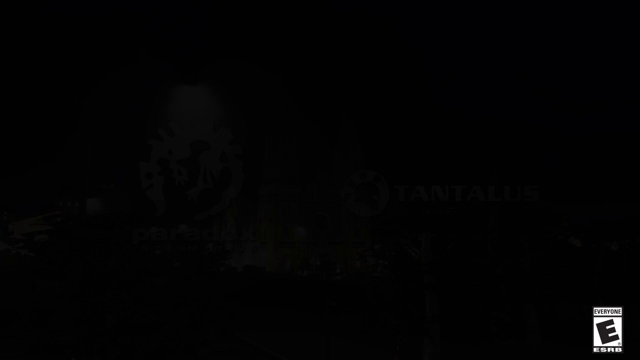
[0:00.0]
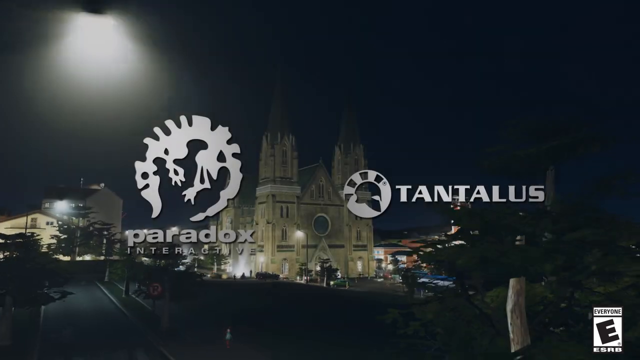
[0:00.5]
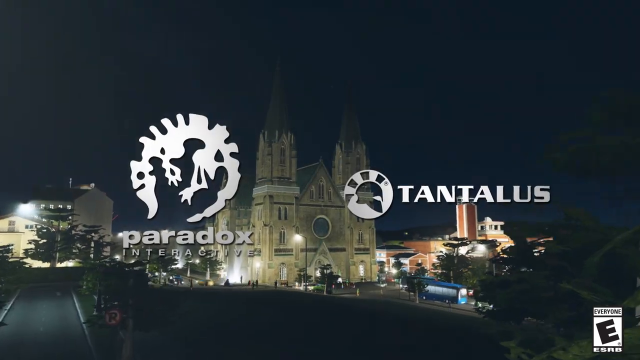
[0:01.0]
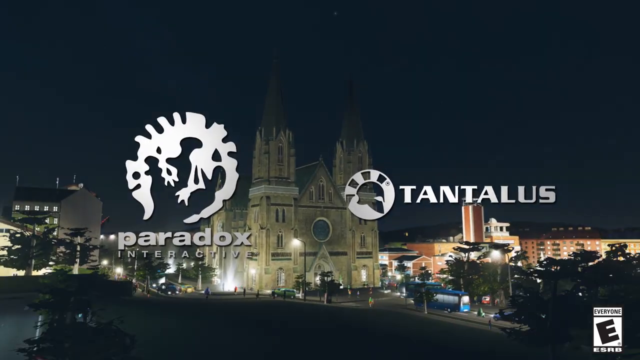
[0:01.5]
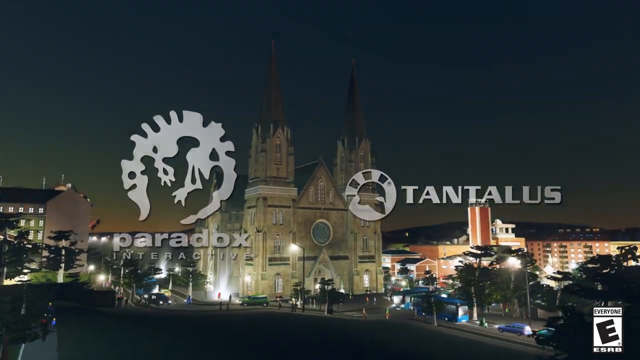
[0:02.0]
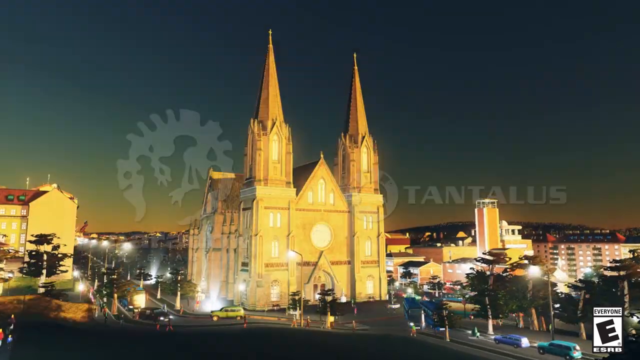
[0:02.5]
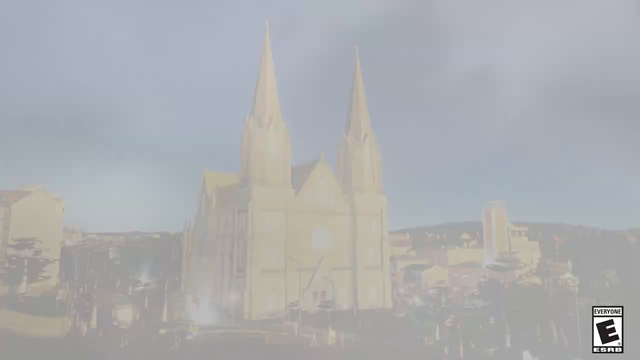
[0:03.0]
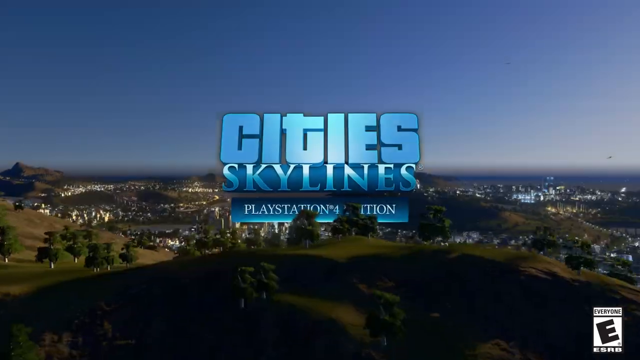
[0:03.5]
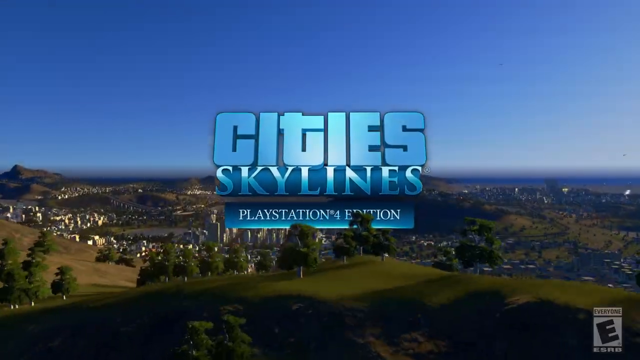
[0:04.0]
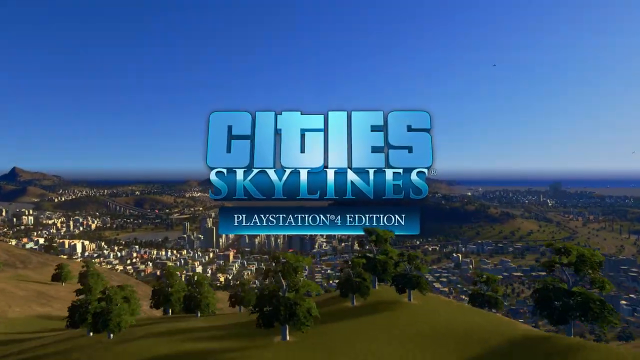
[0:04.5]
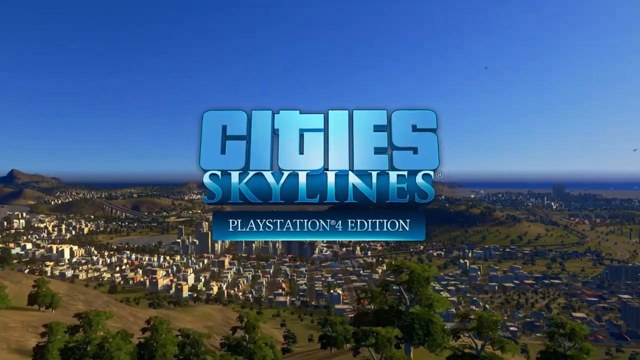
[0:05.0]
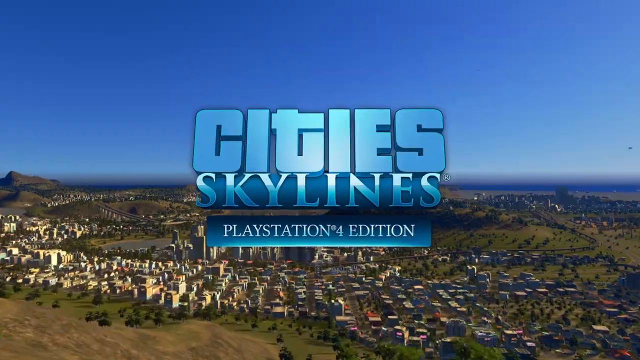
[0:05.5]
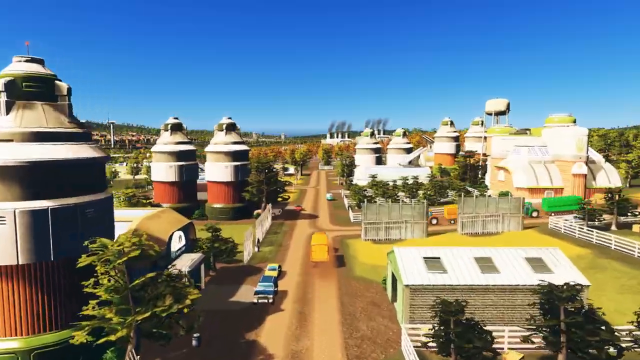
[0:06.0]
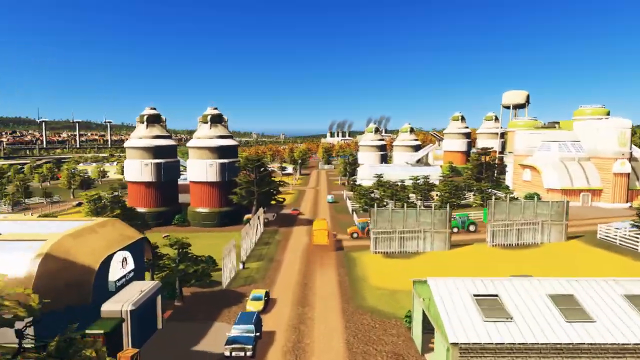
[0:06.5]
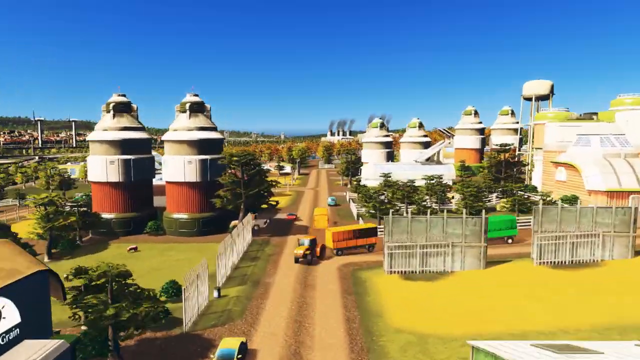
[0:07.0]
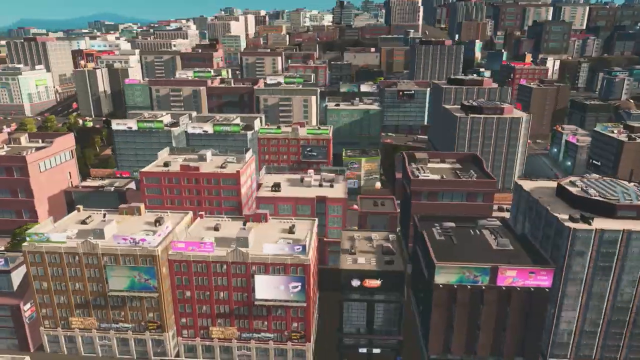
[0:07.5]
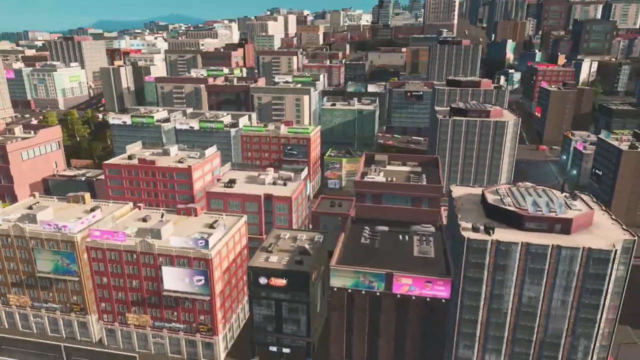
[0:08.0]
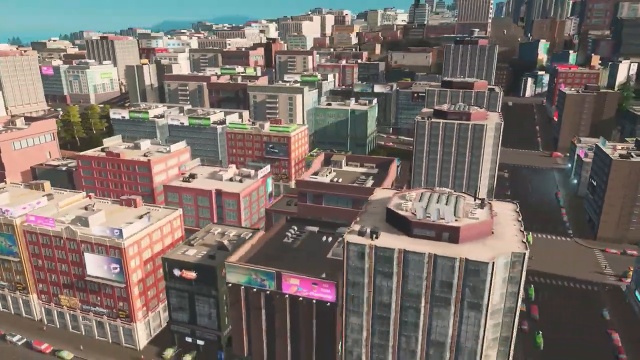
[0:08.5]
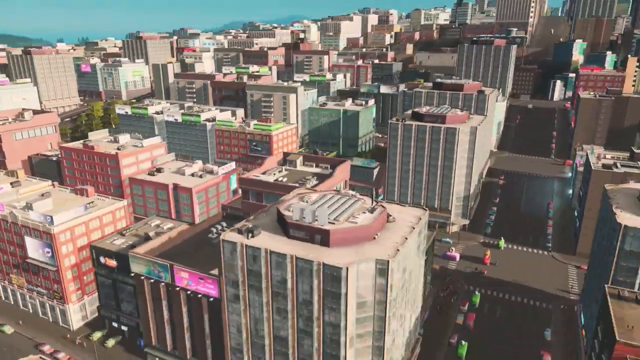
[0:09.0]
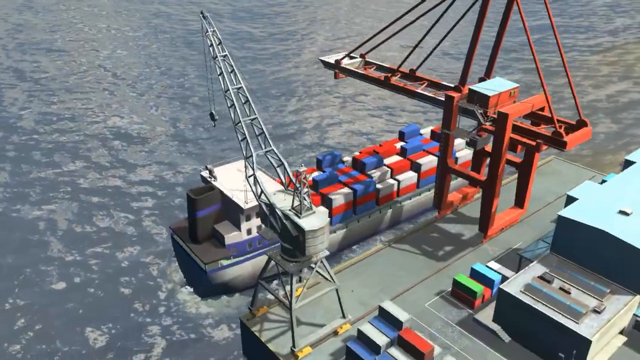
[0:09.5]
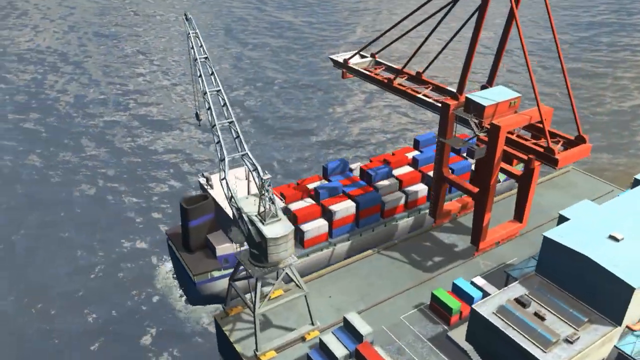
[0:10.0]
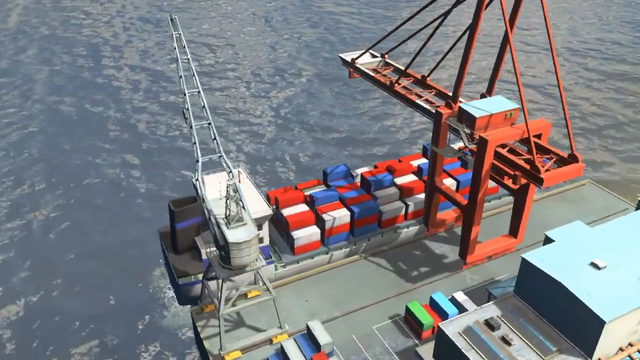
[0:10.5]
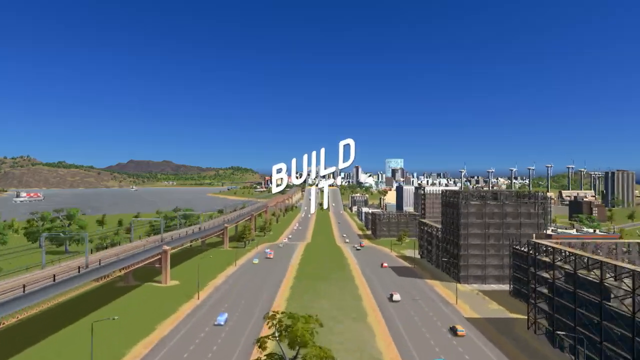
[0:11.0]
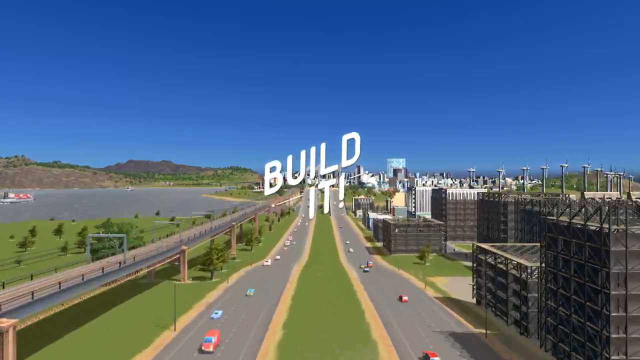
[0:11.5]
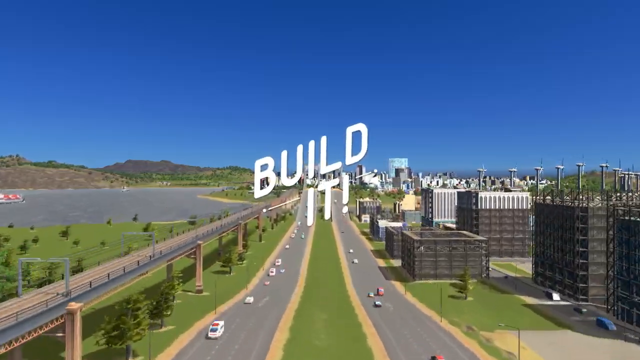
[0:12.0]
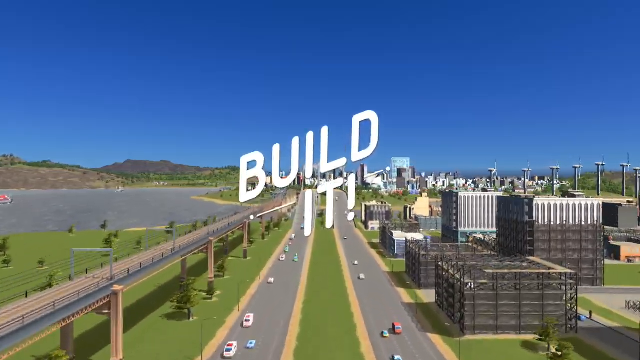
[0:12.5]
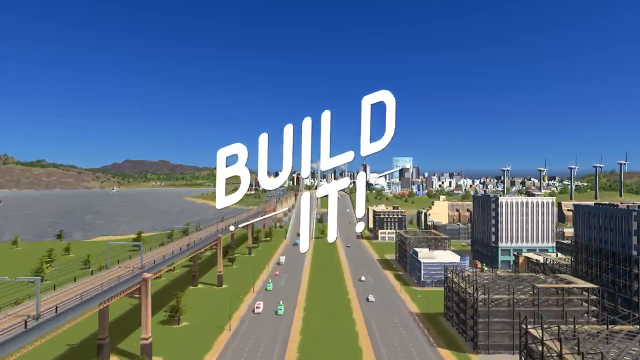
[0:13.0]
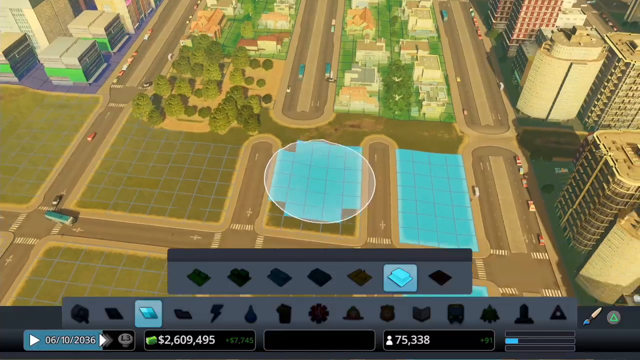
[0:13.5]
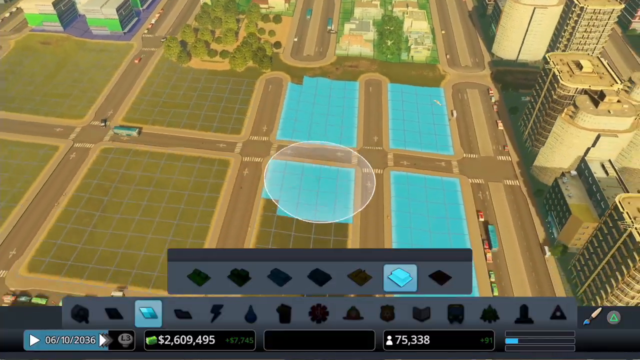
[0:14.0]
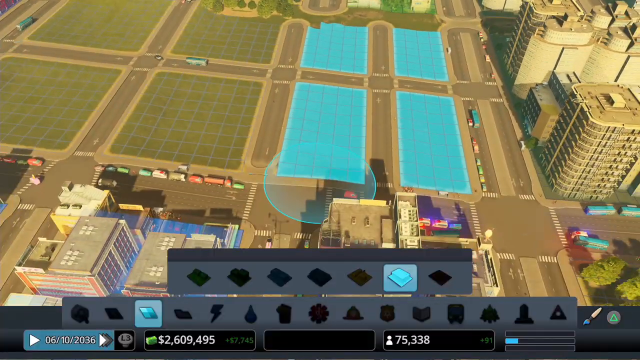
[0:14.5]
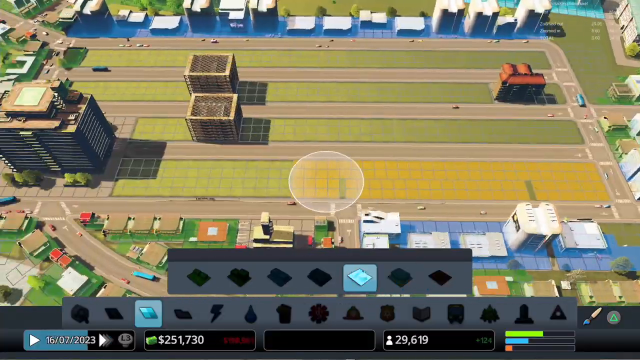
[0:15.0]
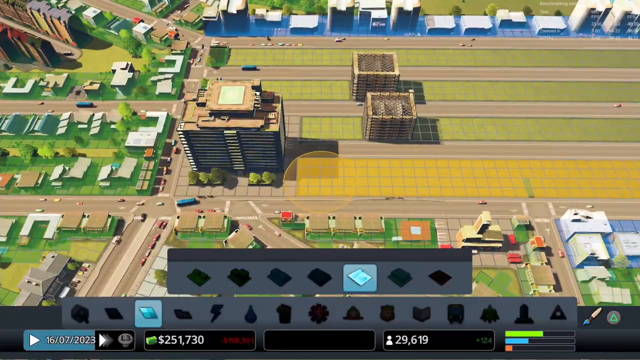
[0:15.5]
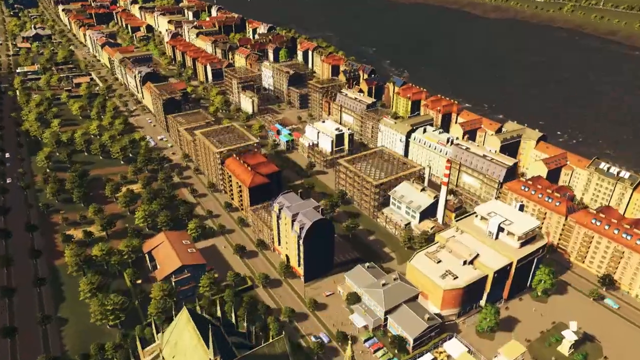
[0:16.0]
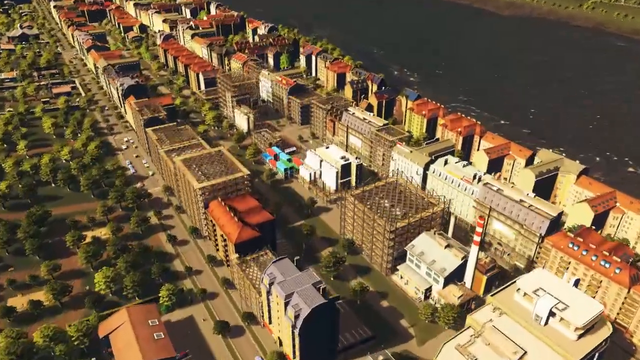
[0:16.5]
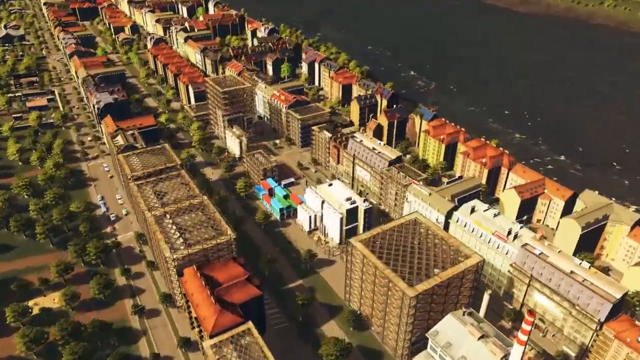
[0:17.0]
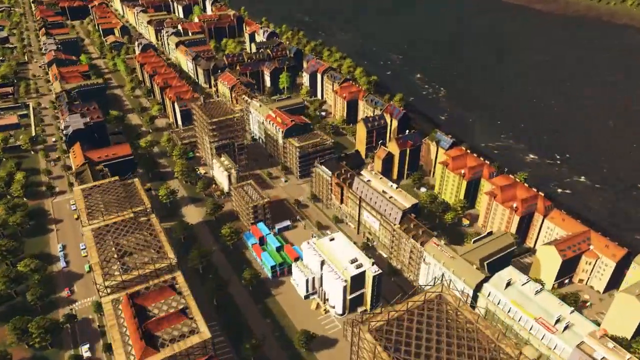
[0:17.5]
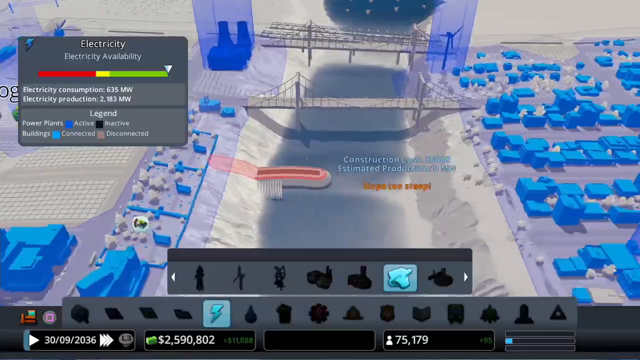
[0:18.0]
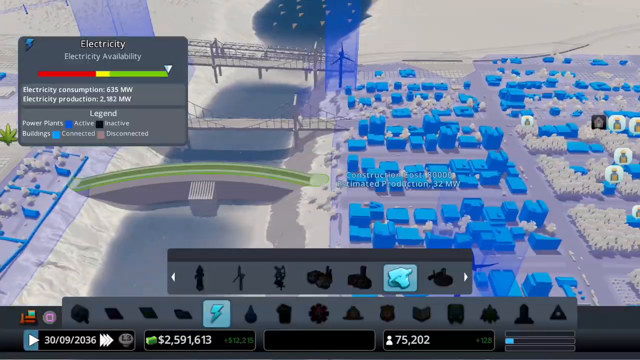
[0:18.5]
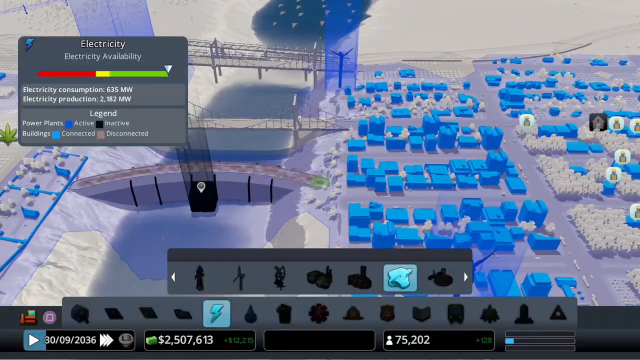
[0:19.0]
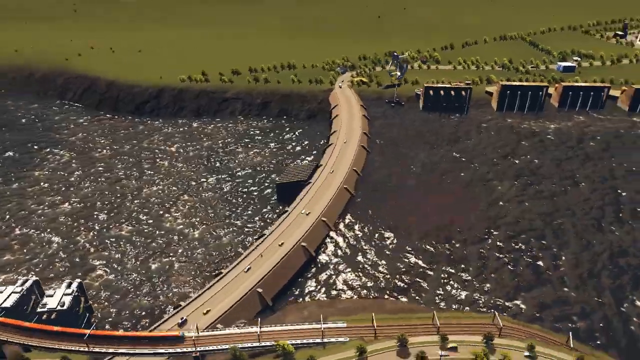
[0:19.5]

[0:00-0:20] A white background with a black shadow at the bottom that kind of tapers out appears first. Once it loads, a black background transitions to a night scene showing a large goldish building with a bunch of city lights and other buildings surrounding it. A logo that looks like a gearbox has clear, transparent white text under it that says "Paradox Interactive", and to the right is another logo with clear white text that says "Tantalus". The scene then slowly transitions into what is possibly a game: a bunch of clouds move, revealing a bright blue sky and a lot of green plain areas with some trees and houses in the distance. Bolded blue text says "Cities Skylines PlayStation 4 Edition". The view slowly zooms in on traffic going down a street, then transitions to a scene of a bunch of buildings that are very congested and close together, with the camera slightly spinning around them. Next comes a large body of water with what looks like a dock or a boat with some type of crane hovering over the water and a bunch of red, white and blue objects next to it, along with a very large red object. The camera zooms in on a highway with white text over it that says "Build It". A person fills in little grids with a blue color, and then a city is shown being generated. Another scene shows a box that says "Electricity, Electricity Available, Electricity Consumption, 635 MW, Electricity Production", along with power plants active and inactive, buildings connected and disconnected, and a bunch of blue objects. A large body of water with a bridge over it follows.